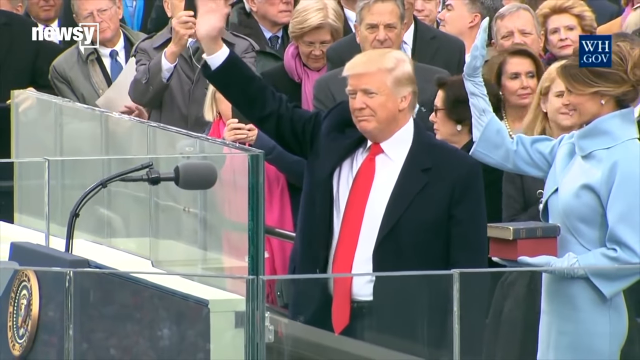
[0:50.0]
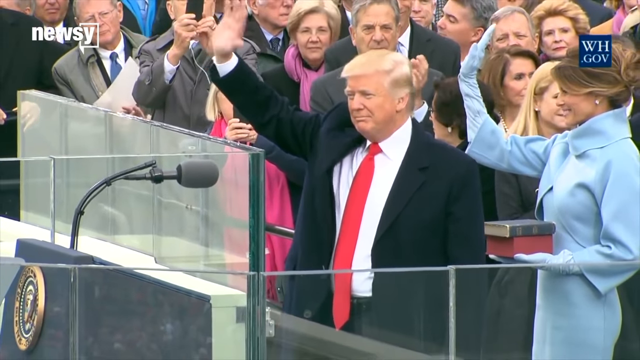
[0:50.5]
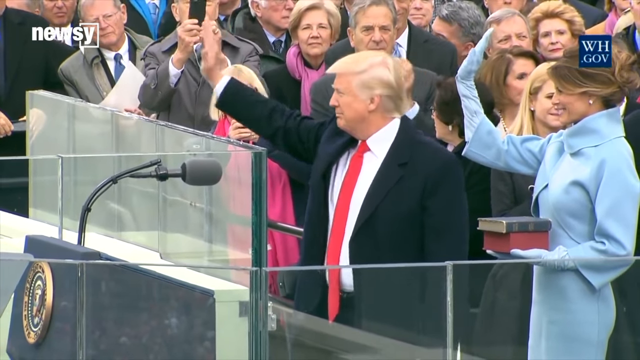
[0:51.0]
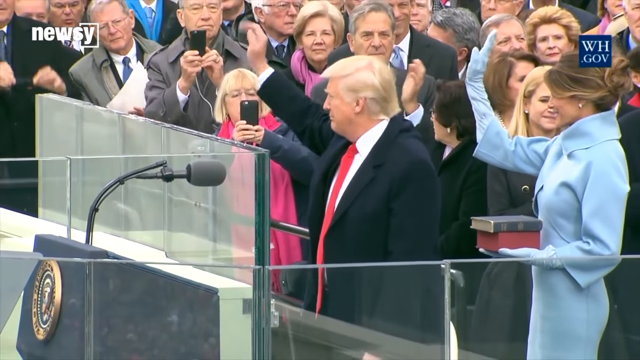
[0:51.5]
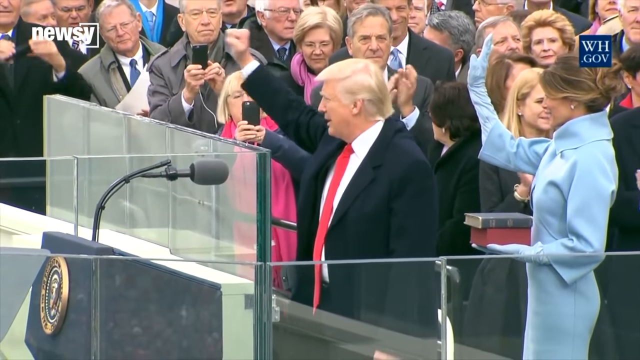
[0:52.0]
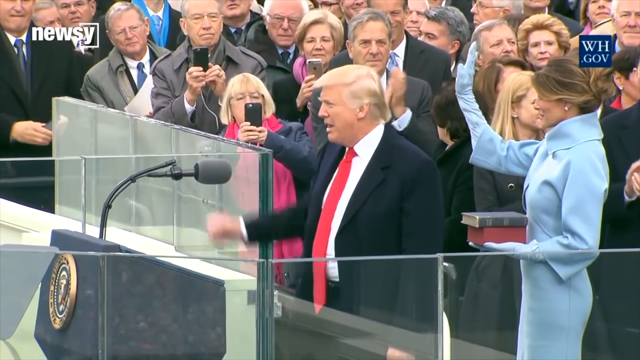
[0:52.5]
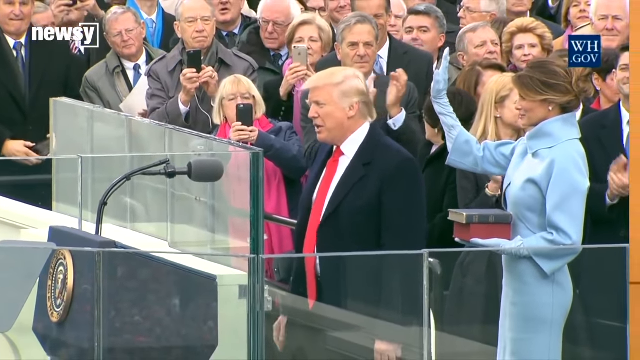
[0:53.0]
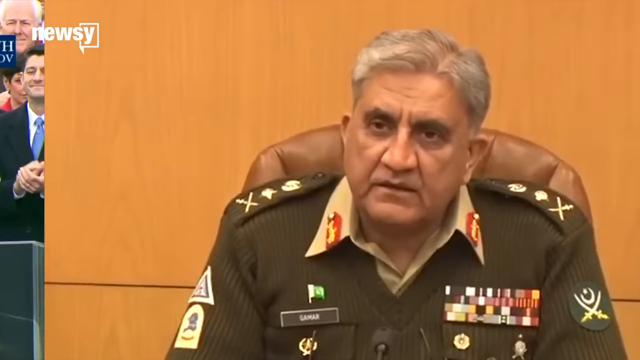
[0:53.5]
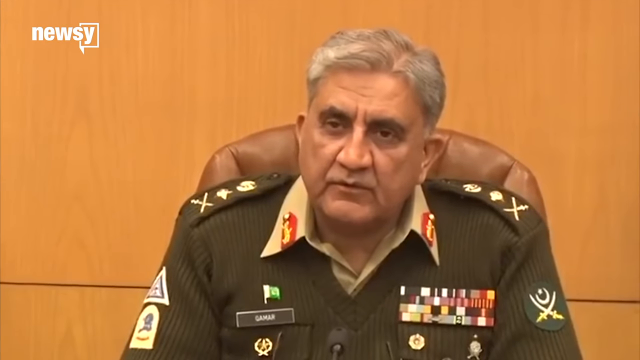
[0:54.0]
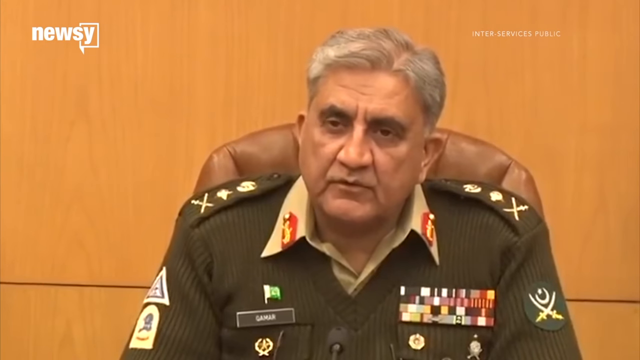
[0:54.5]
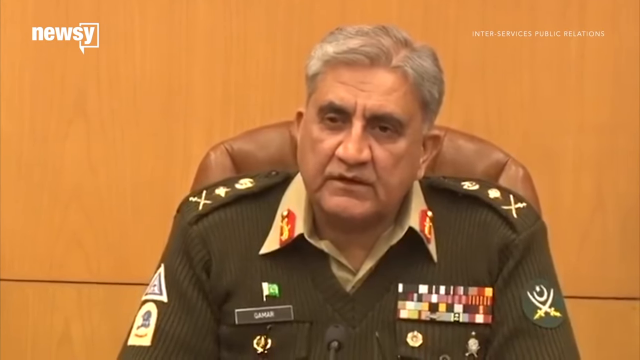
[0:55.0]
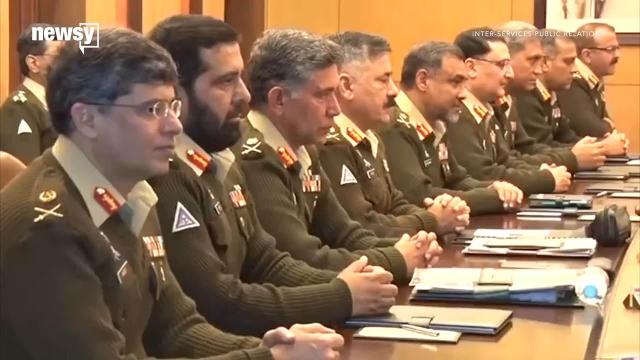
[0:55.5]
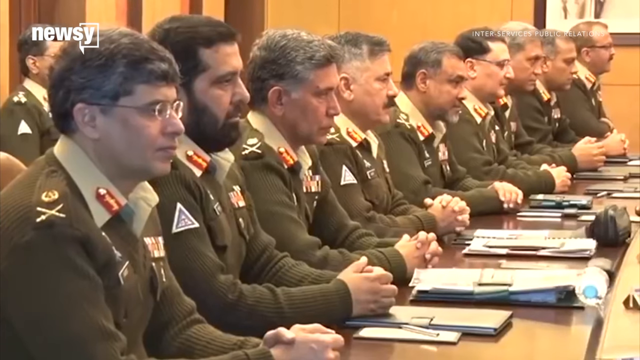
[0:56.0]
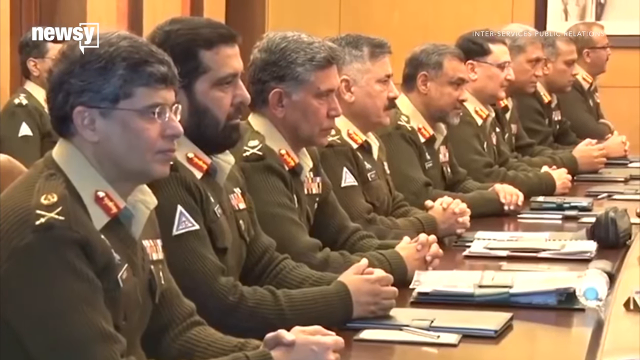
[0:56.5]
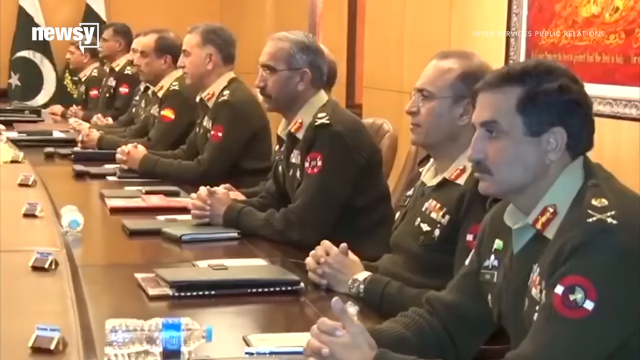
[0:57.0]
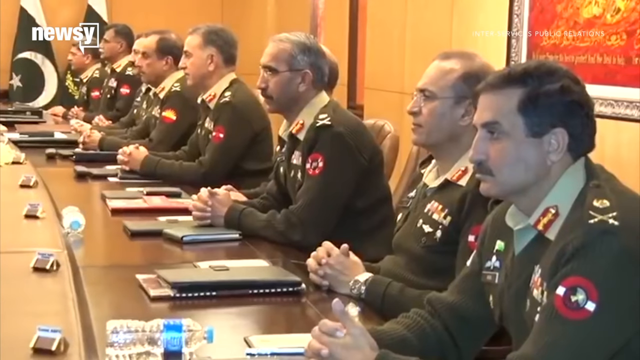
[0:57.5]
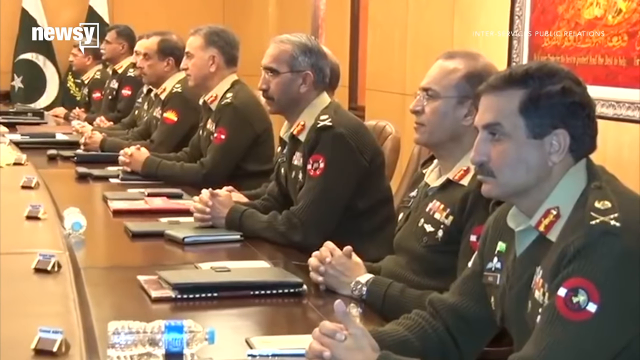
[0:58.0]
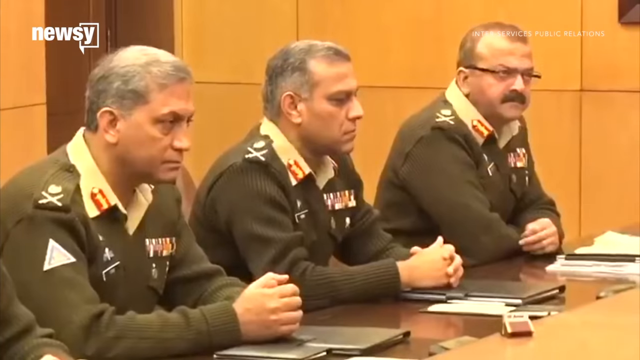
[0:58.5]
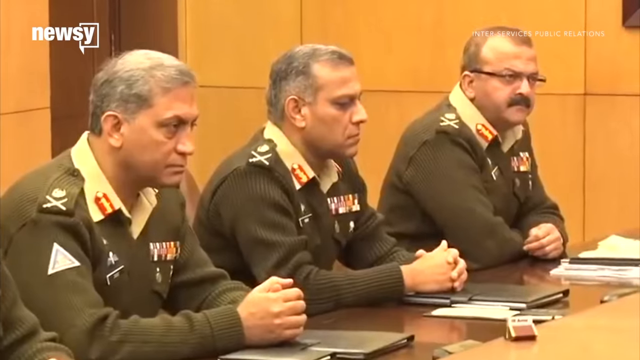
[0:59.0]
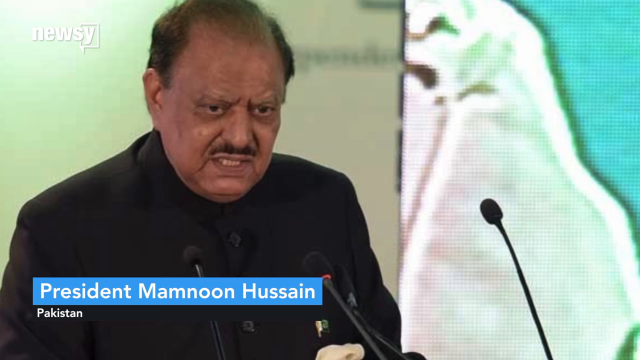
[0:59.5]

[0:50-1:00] Donald Trump and Melania stand in front of a whole crowd of people. A microphone is in the lower left-hand corner of the frame, and Trump waves while people wave back and clap. The video cuts to a Caucasian man with military markings on his collars, shoulders and elsewhere, with white, gray and black hair on top of his head. He is in a room with a whole bunch of similarly dressed people sitting on both sides of a table, talking.